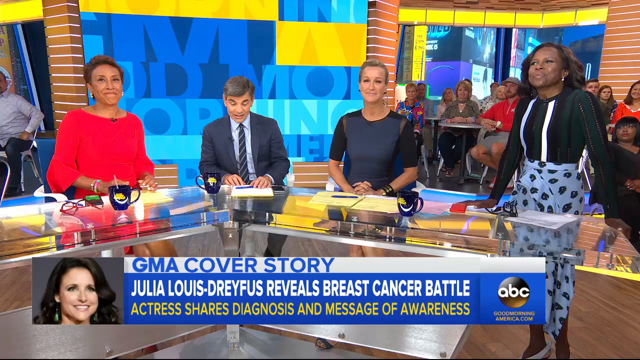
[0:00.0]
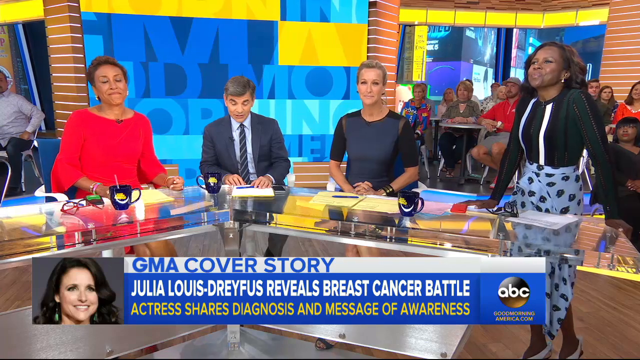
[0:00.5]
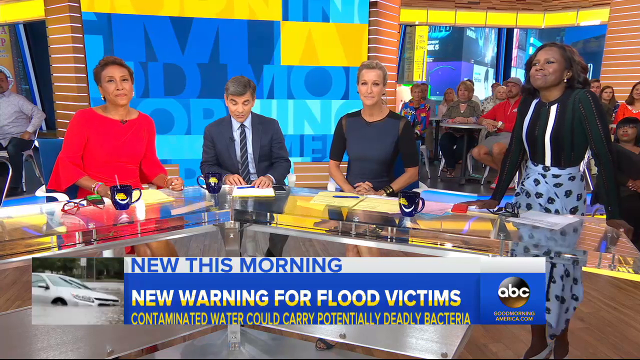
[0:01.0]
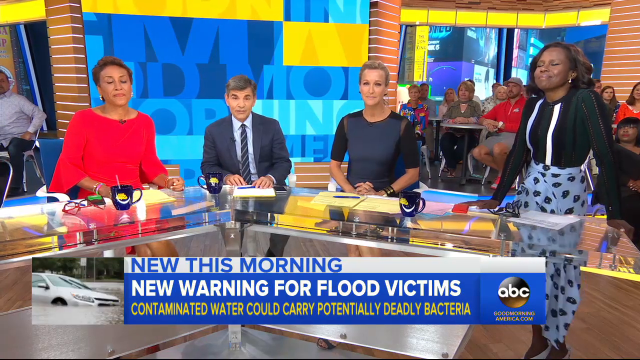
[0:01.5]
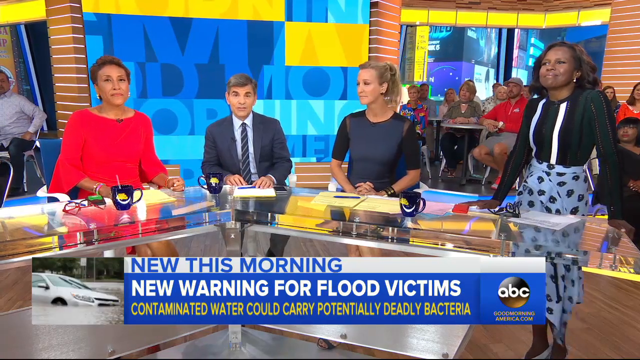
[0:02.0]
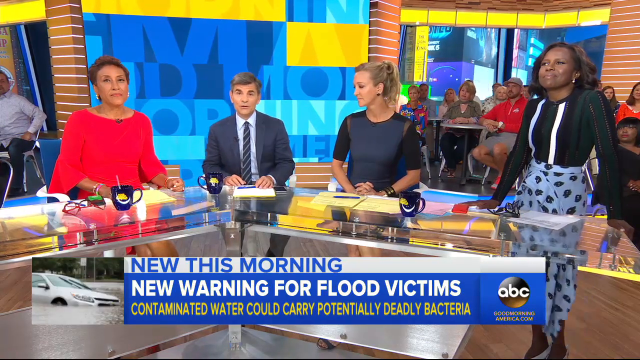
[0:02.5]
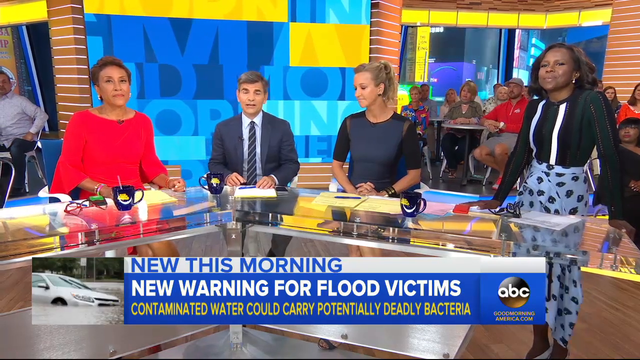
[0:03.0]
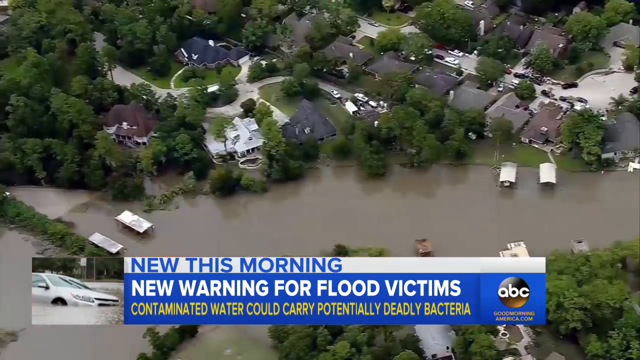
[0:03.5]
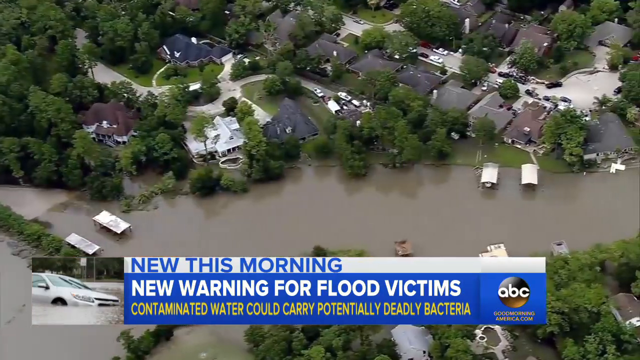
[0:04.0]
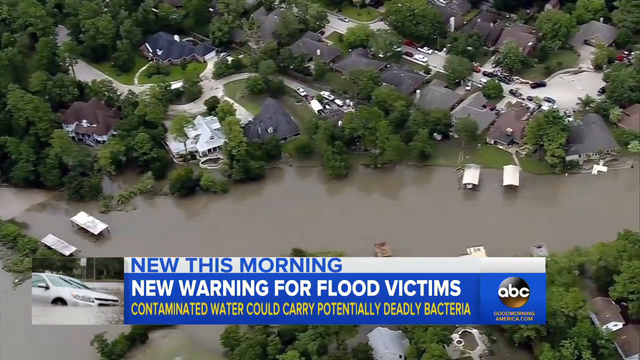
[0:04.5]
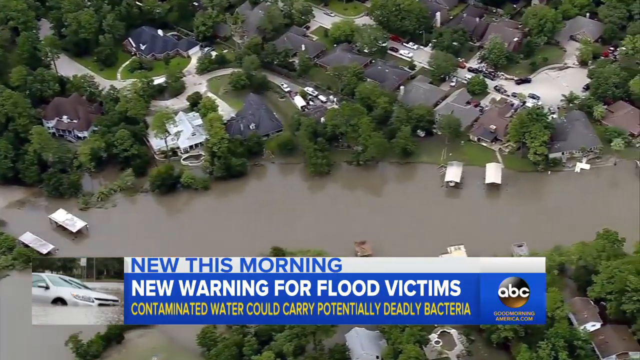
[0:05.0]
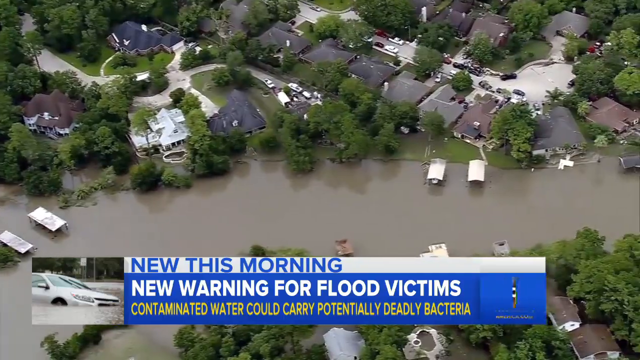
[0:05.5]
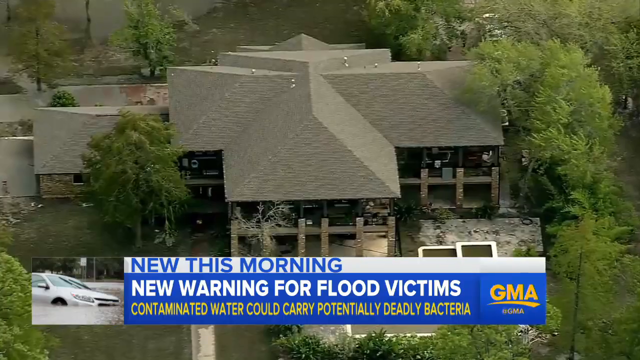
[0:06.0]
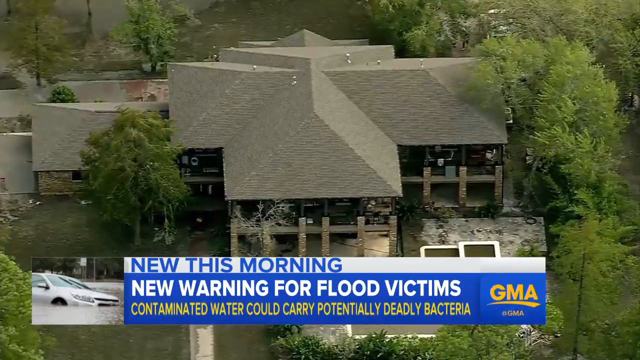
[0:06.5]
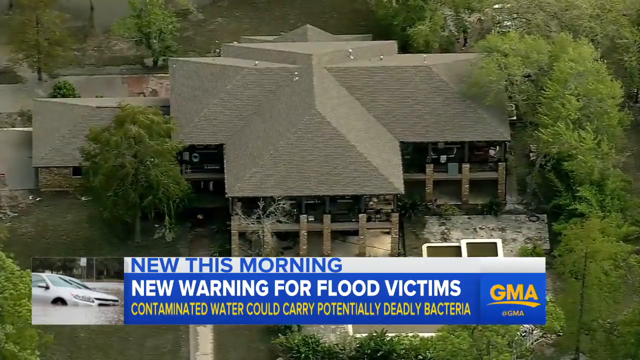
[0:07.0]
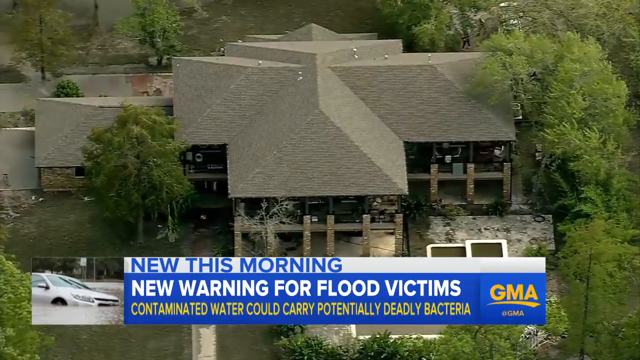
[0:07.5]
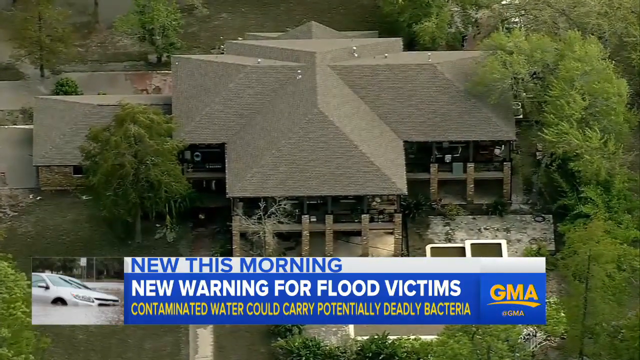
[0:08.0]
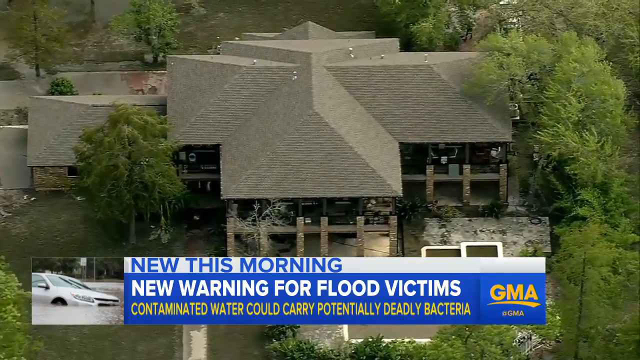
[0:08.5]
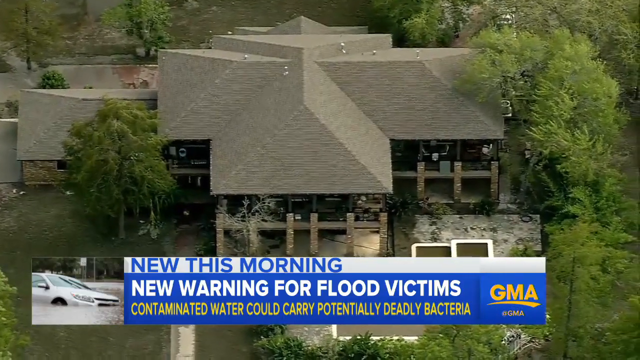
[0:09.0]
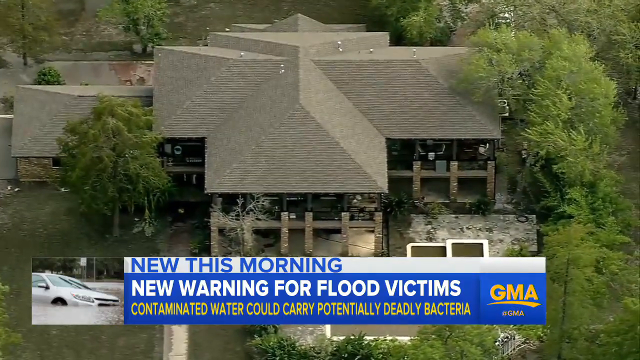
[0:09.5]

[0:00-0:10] The video is from the Good Morning America program. The first scene shows four presenters in a studio, seated at a raised glass-topped desk: three women and one man in the middle, George Stephanopoulos. Behind them, an audience is seated in white chairs at white tables, observing them. The scene switches from the studio to an aerial view of flooding in a residential area. A text bar at the bottom of the screen reads, "New this morning. New warning for flood victims. Contaminated water could carry potentially deadly bacteria." The ABC logo is next to it. Many homes stand in a row with floodwaters in front of them. Another view shows a single home that is also surrounded by water.